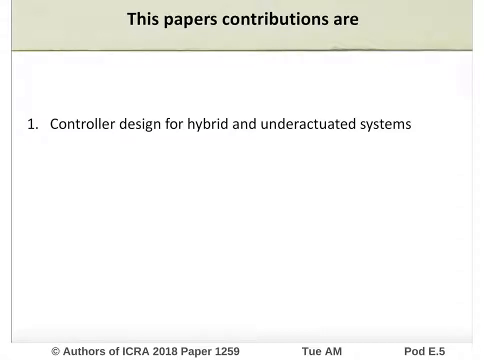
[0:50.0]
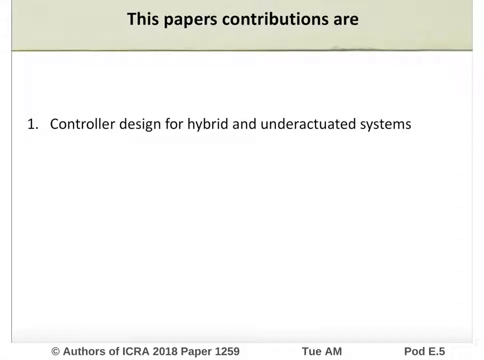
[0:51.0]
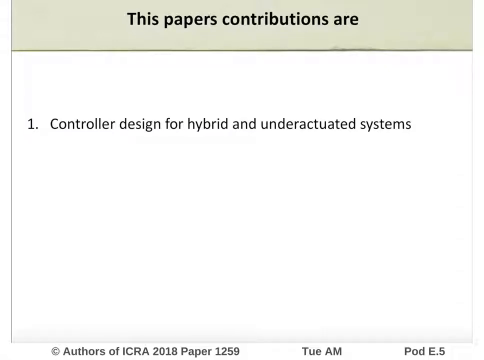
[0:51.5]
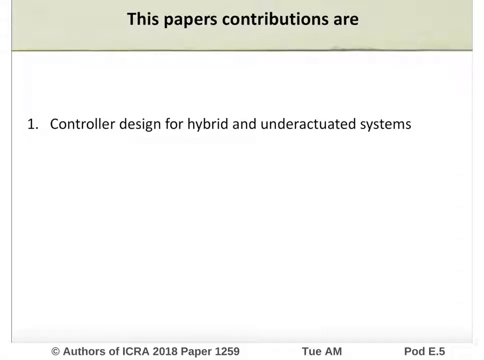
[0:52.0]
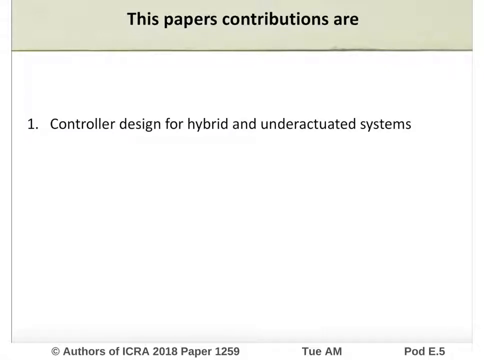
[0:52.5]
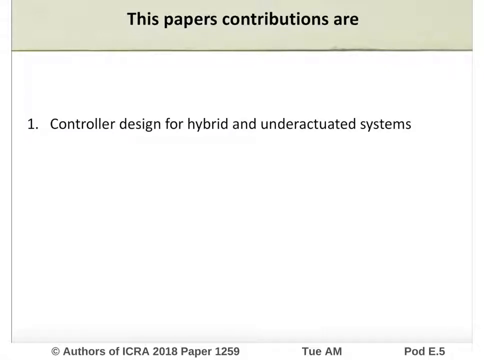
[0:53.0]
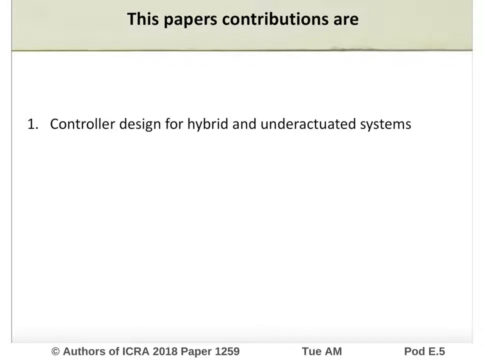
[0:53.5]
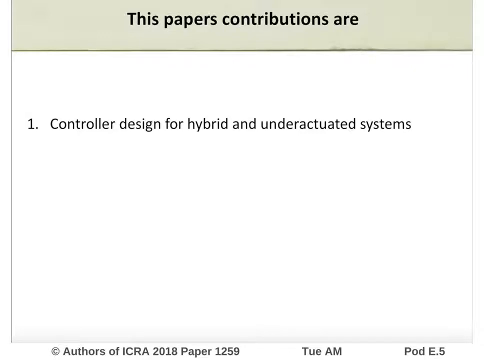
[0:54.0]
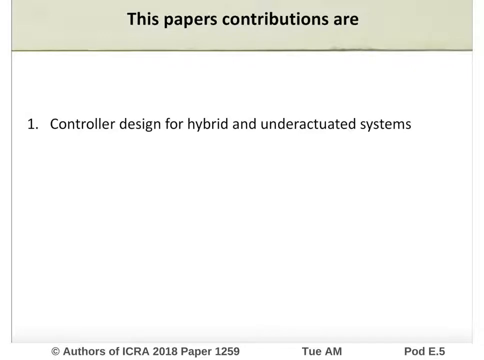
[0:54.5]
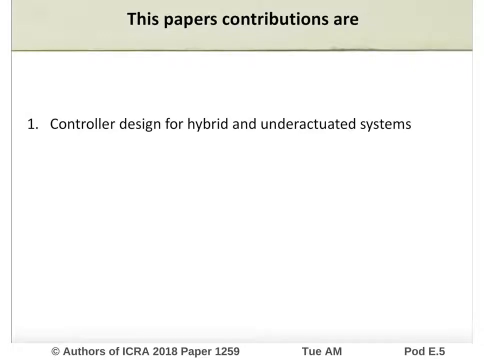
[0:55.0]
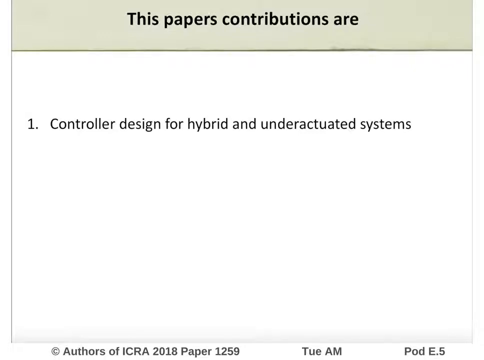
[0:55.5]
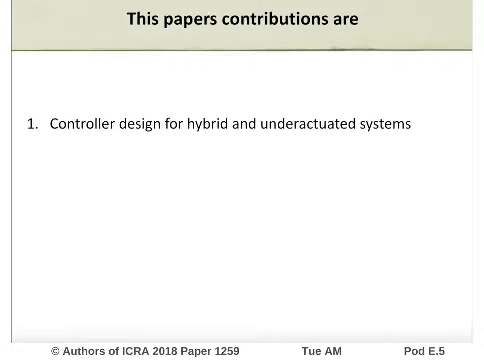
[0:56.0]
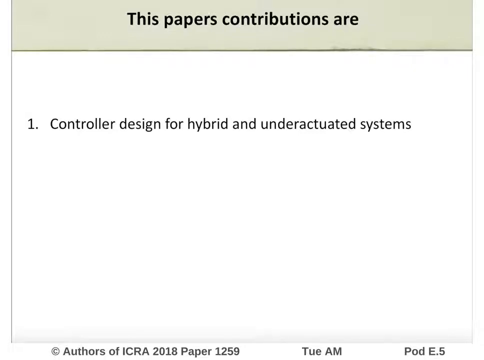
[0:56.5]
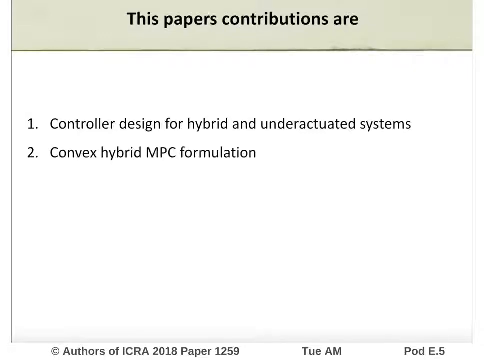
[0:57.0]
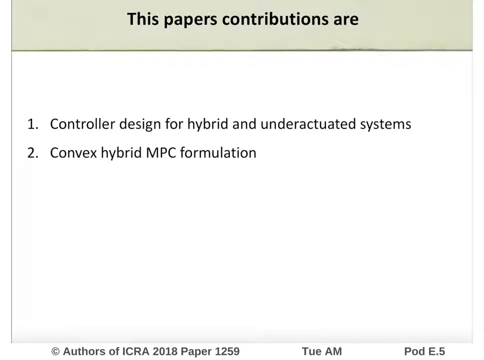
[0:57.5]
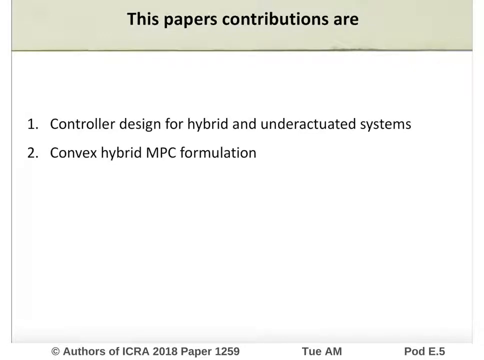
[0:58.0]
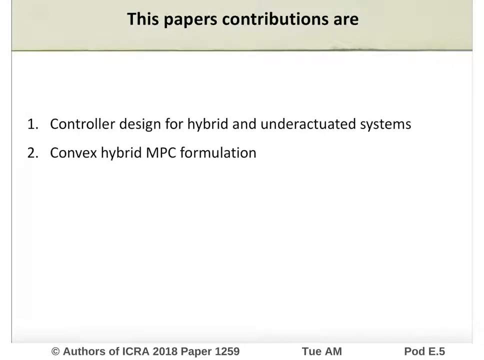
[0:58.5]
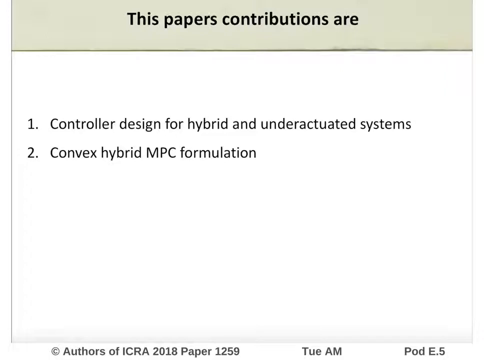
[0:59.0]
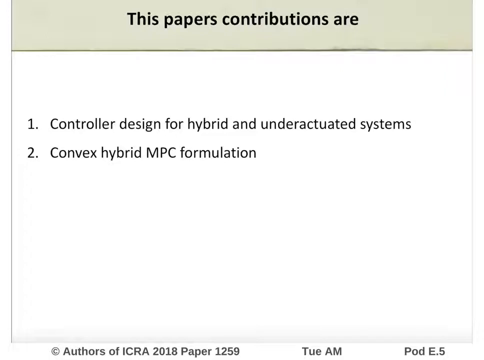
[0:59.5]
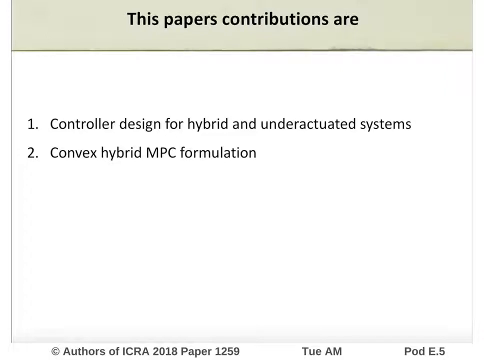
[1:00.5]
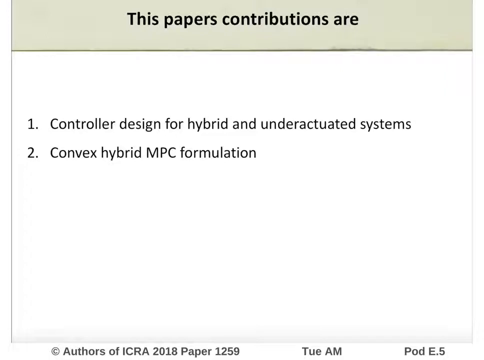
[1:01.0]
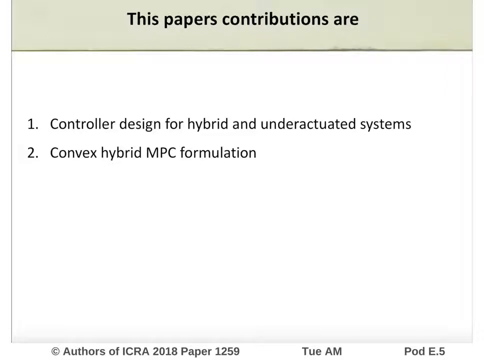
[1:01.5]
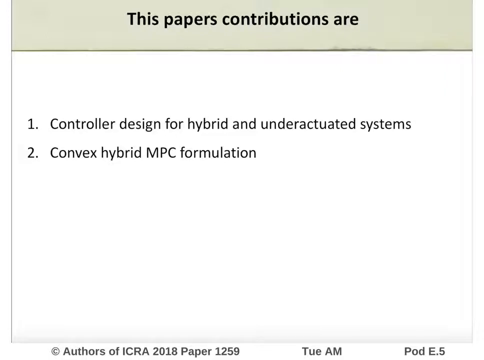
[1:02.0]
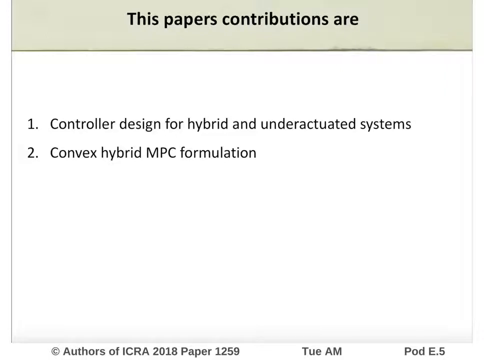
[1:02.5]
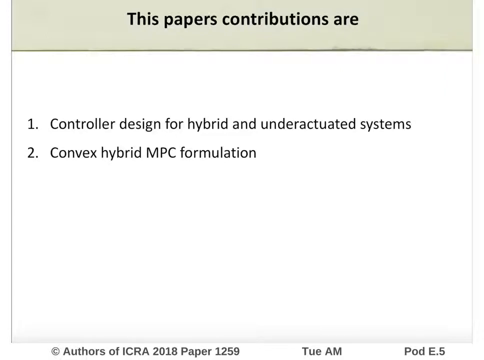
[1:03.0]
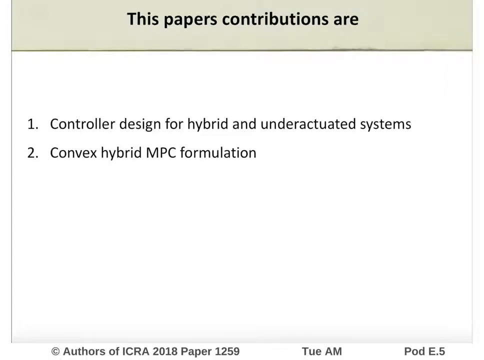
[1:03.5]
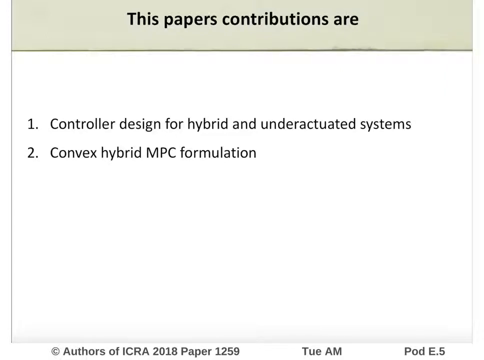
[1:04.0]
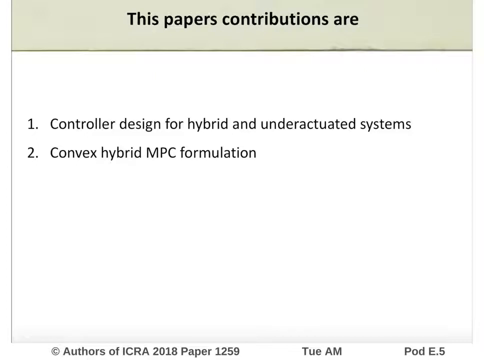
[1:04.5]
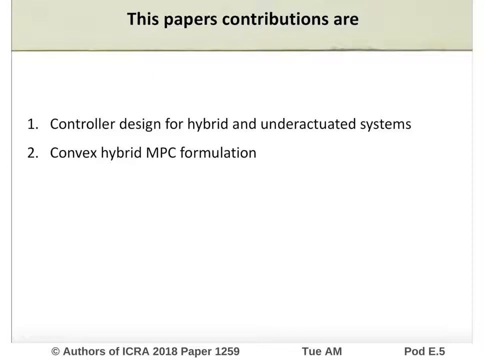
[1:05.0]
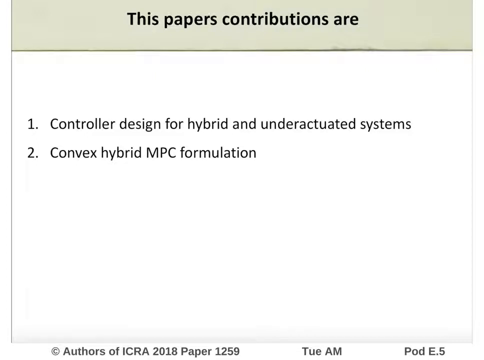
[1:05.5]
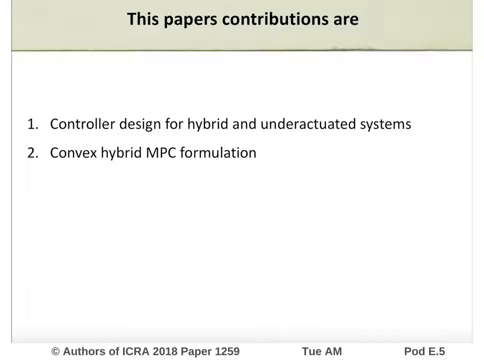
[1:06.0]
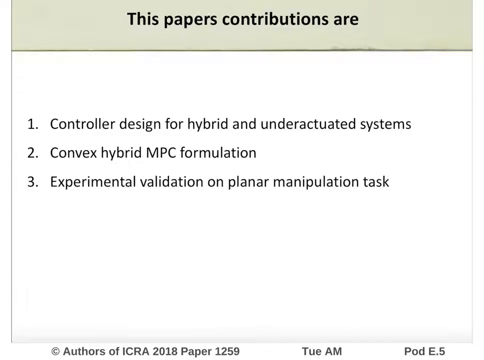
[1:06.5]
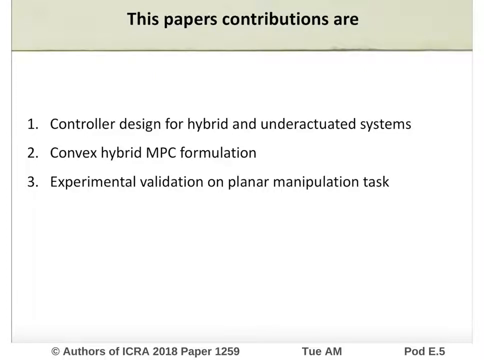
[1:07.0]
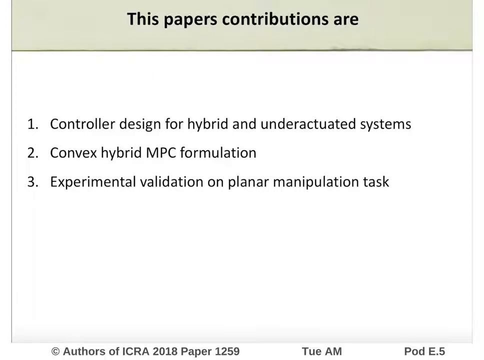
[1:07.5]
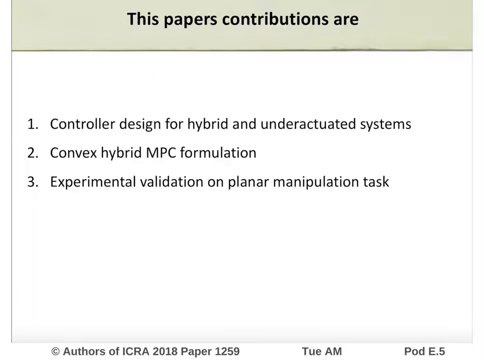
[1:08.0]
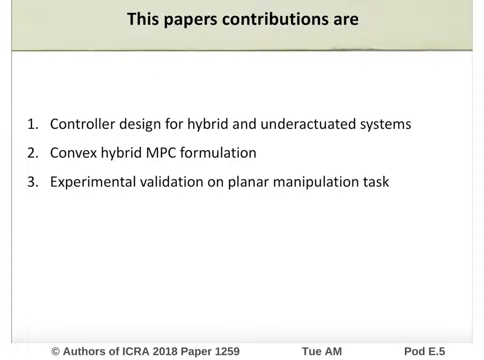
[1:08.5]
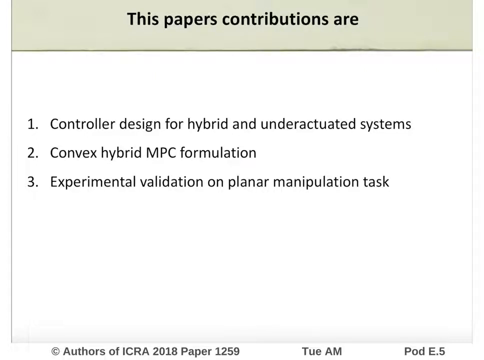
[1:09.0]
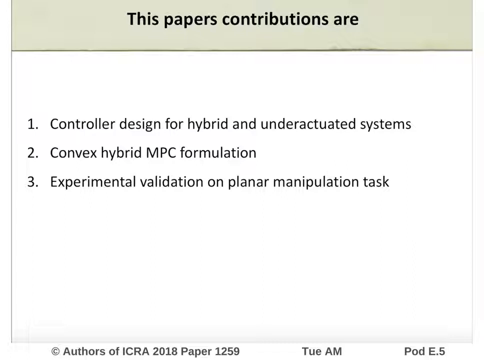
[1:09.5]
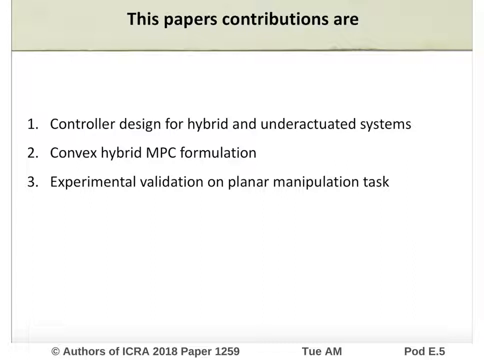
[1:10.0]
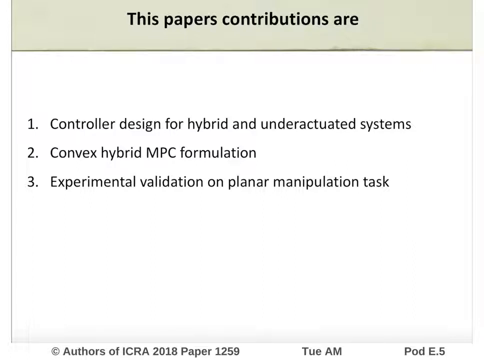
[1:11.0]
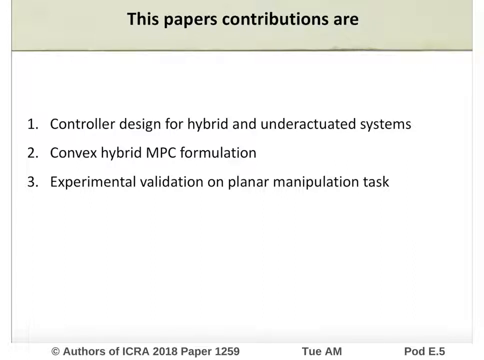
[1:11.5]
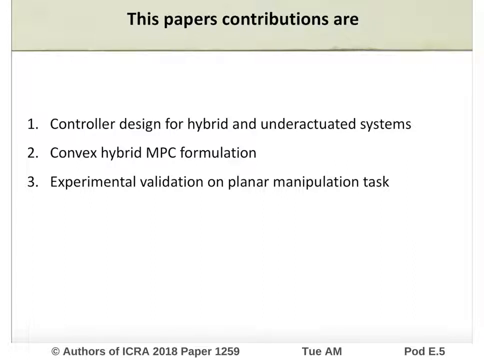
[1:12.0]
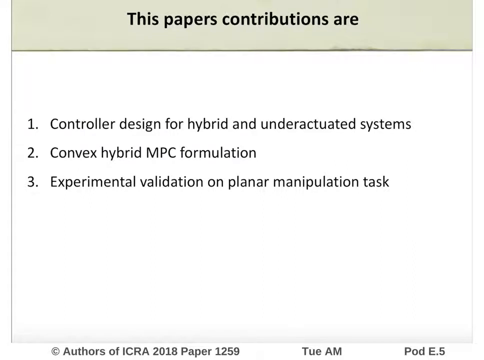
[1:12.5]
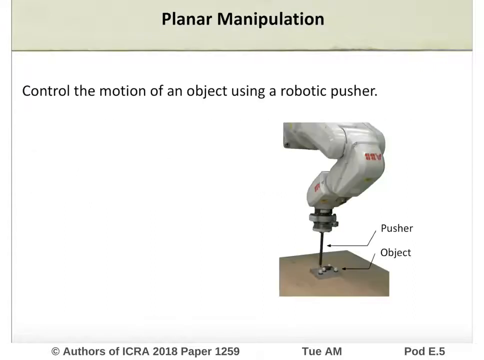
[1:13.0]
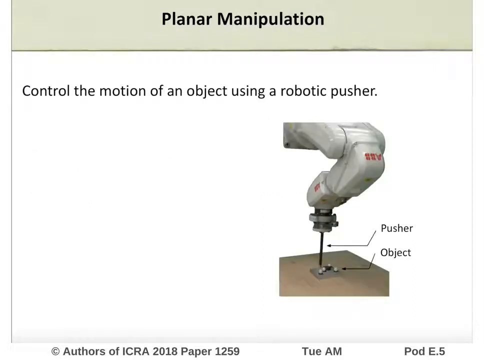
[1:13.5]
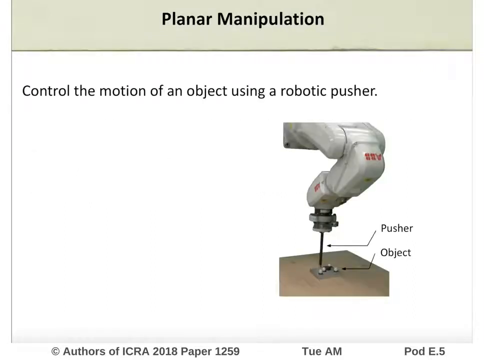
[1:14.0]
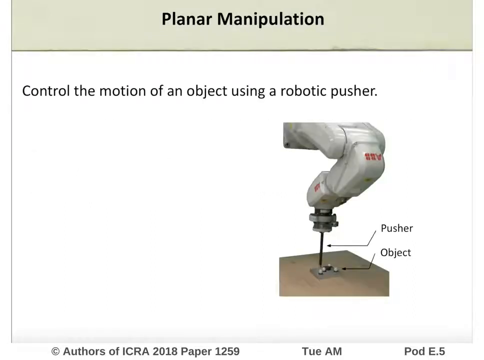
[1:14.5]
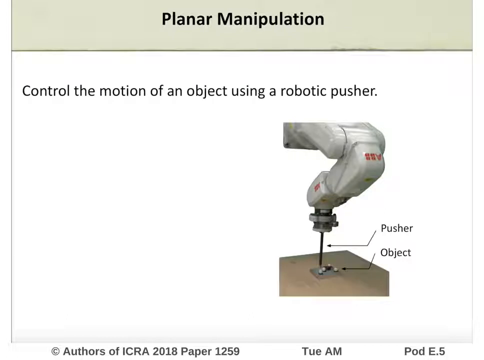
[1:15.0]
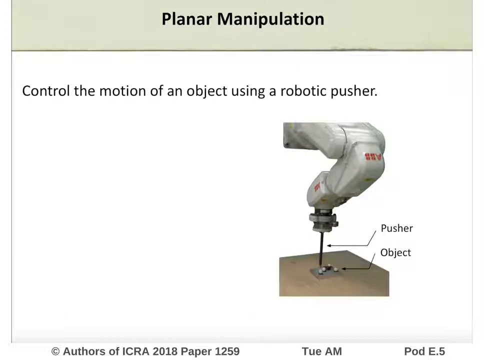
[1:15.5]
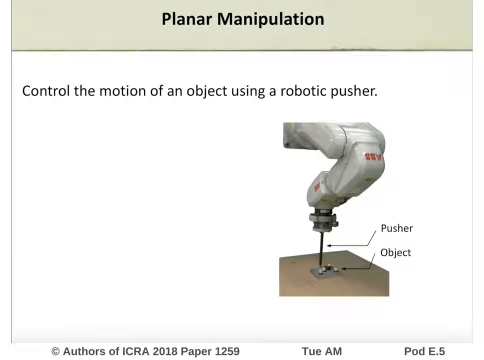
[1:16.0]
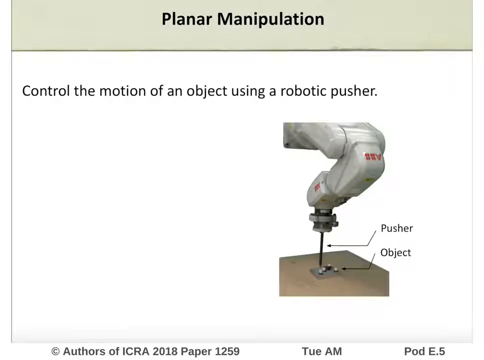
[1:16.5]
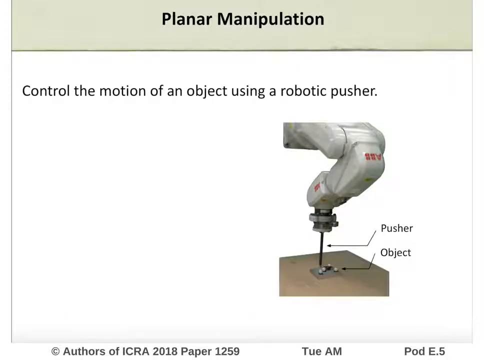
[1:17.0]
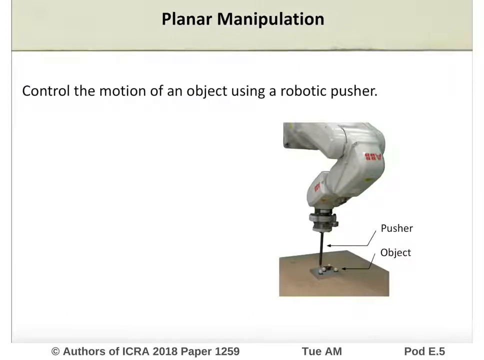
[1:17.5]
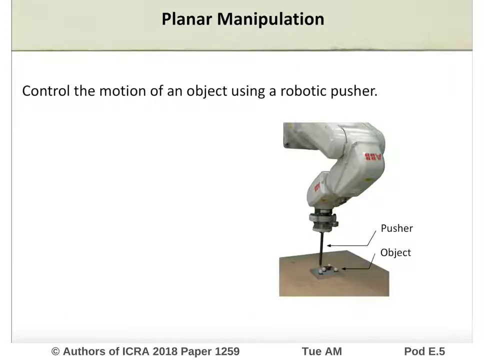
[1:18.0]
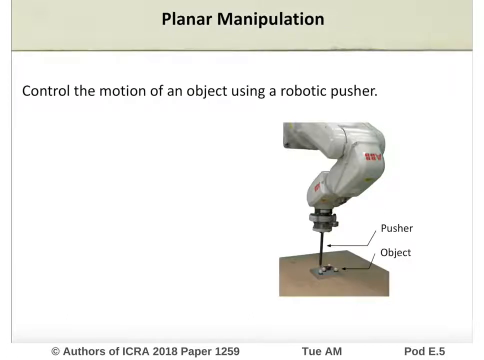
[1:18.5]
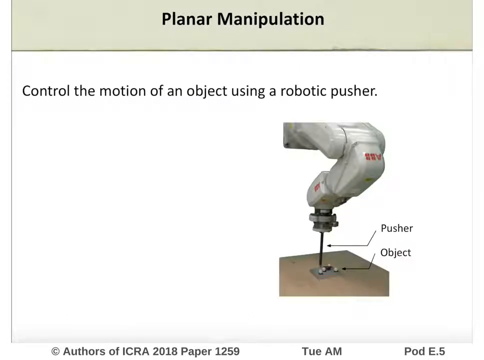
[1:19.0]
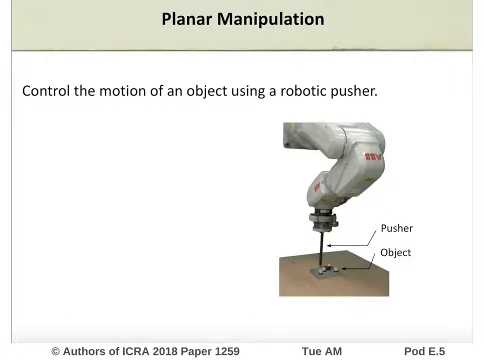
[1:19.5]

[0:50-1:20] The paper's contributions are listed: number one, "controller design for hybrid and underactuated systems"; number two, "convex hybrid MPC formulation"; and number three, "experimental validation on planar manipulation task." Planar manipulation is presented as controlling the motion of an object using a robotic pusher. The robot is the pusher, and the object is like a metal rectangle with some balls of other metal on it. The pusher looks like a metal machine with what is almost like a metal straw going down, and it moves the object around on a surface. The machine is mostly white with some red lines on it; it looks almost like a drill, or kind of like maybe an elbow arm, and it is made of metal.